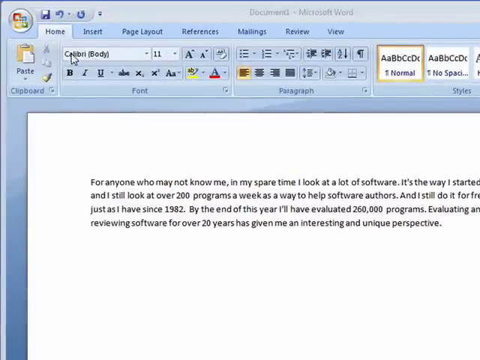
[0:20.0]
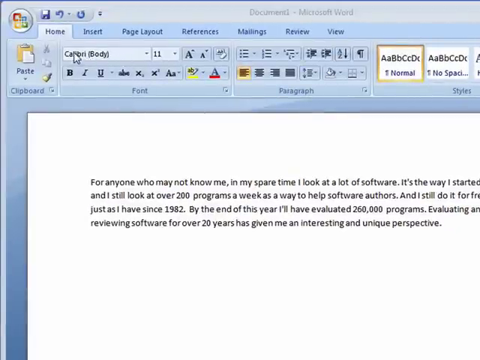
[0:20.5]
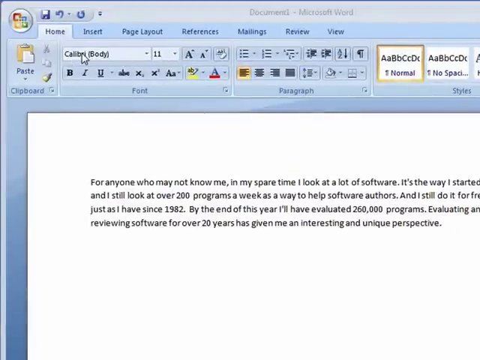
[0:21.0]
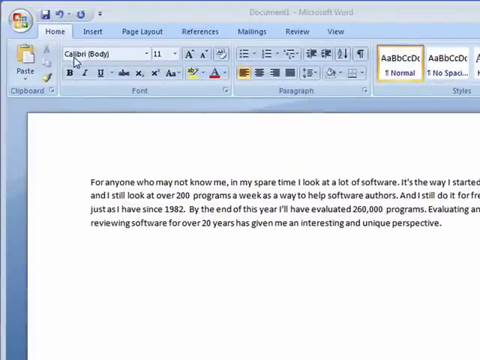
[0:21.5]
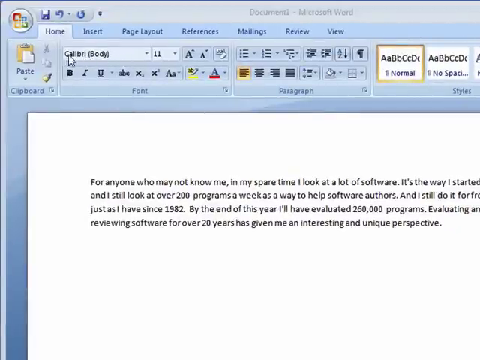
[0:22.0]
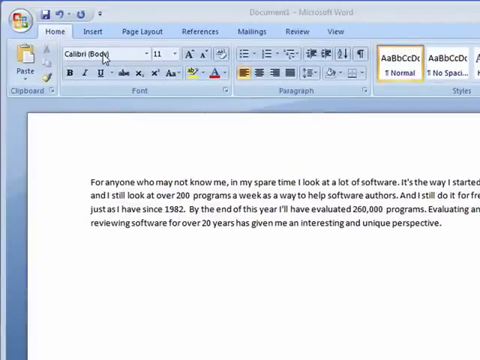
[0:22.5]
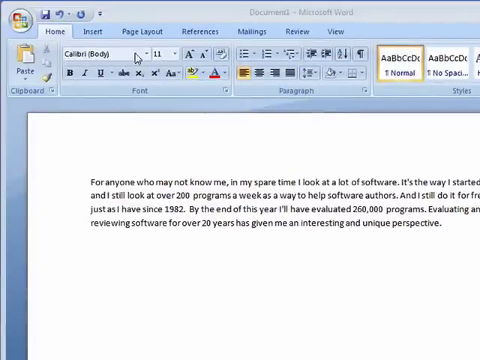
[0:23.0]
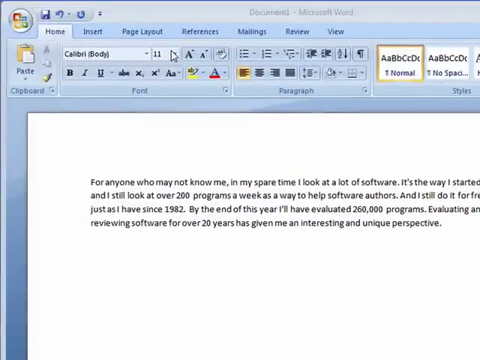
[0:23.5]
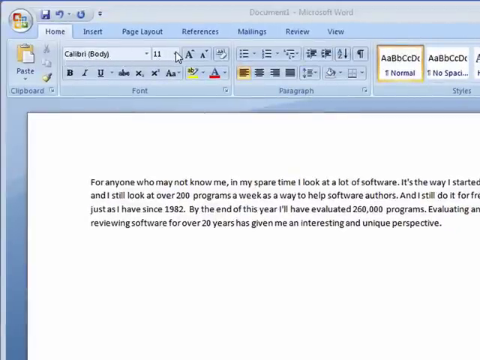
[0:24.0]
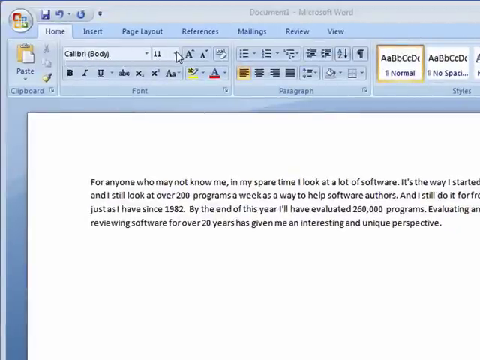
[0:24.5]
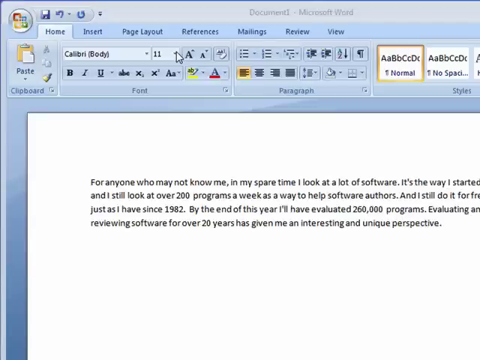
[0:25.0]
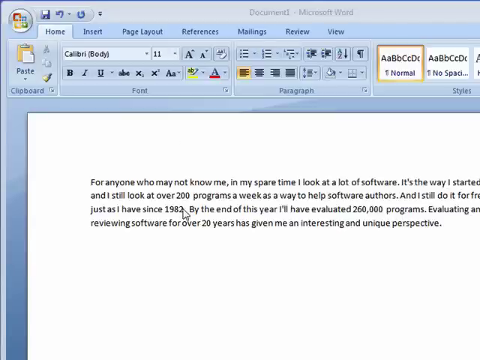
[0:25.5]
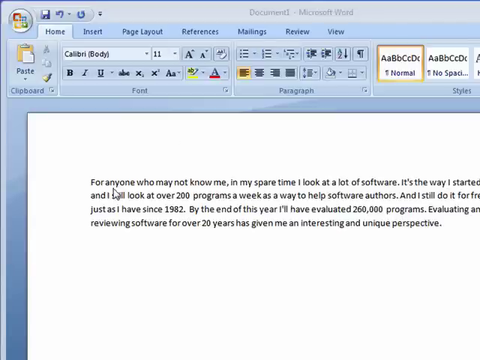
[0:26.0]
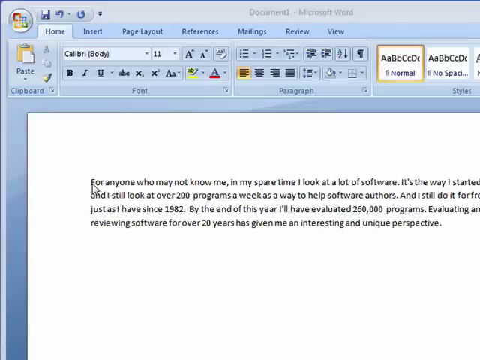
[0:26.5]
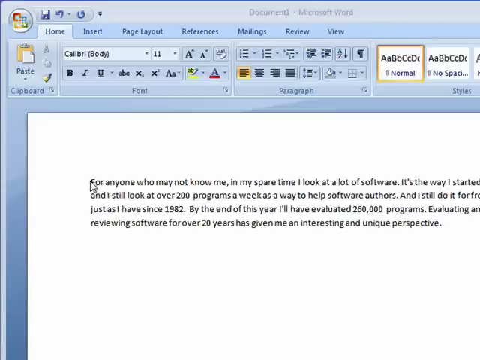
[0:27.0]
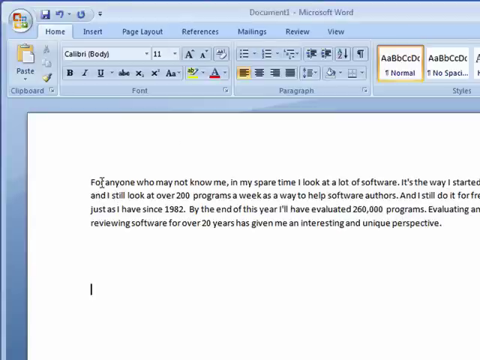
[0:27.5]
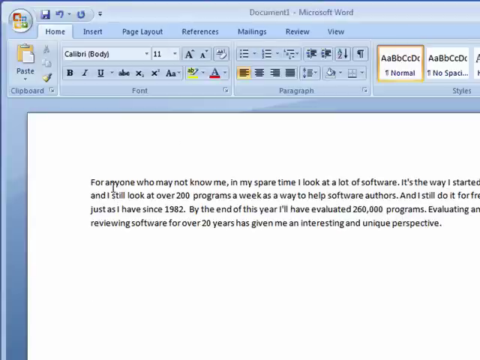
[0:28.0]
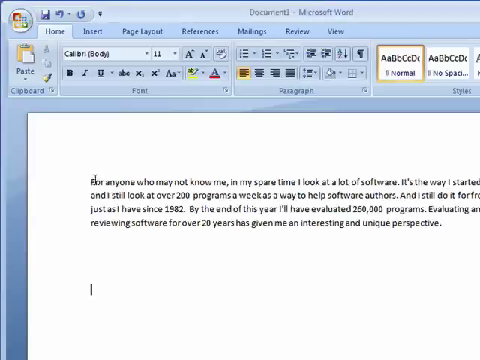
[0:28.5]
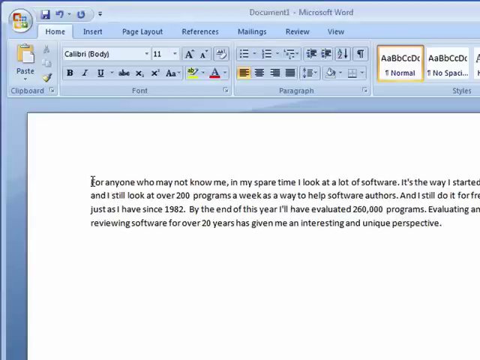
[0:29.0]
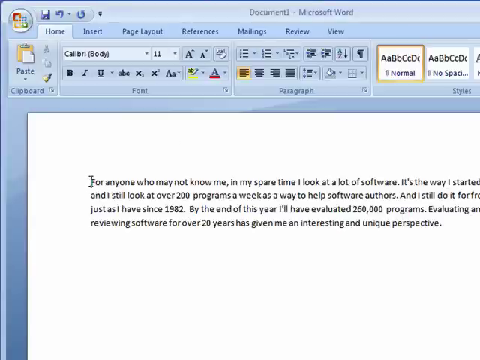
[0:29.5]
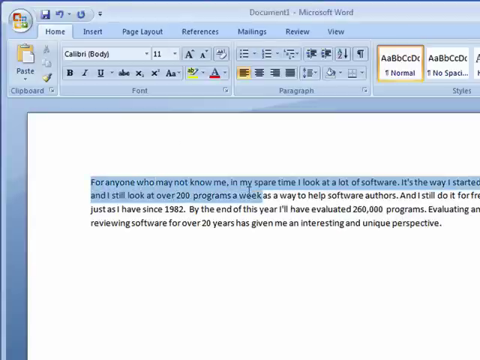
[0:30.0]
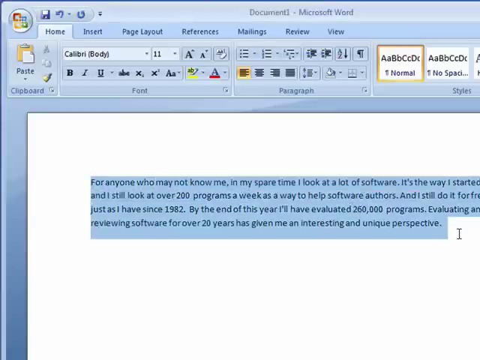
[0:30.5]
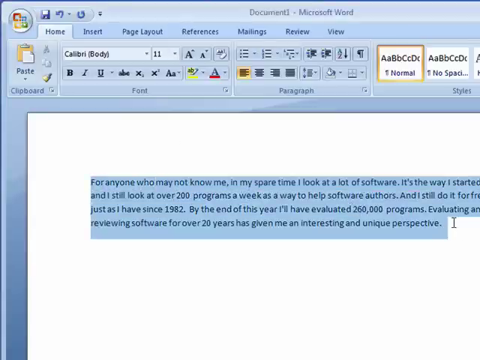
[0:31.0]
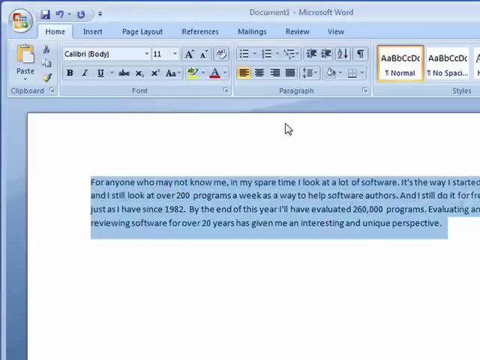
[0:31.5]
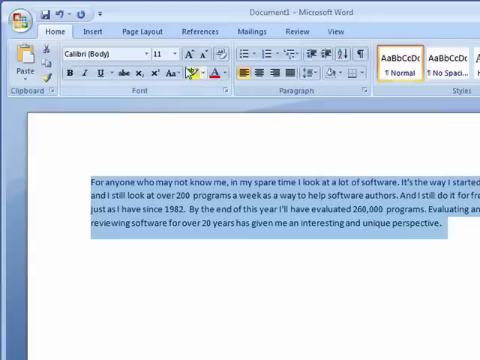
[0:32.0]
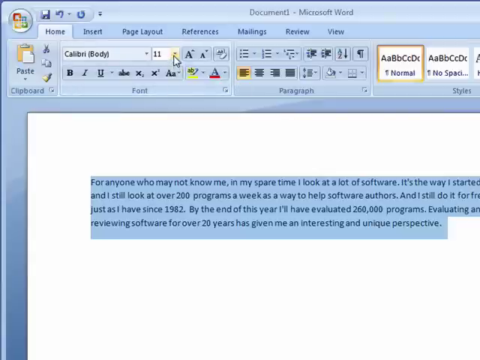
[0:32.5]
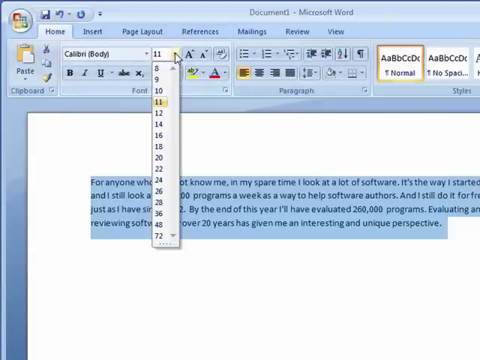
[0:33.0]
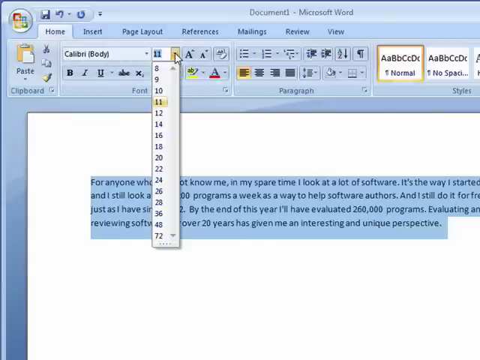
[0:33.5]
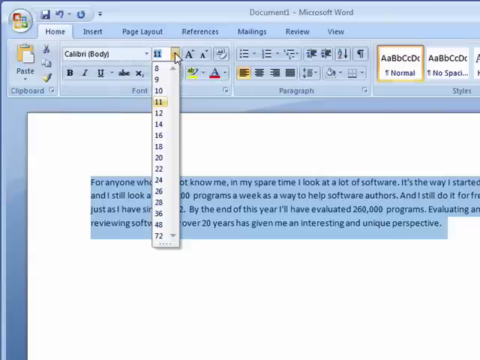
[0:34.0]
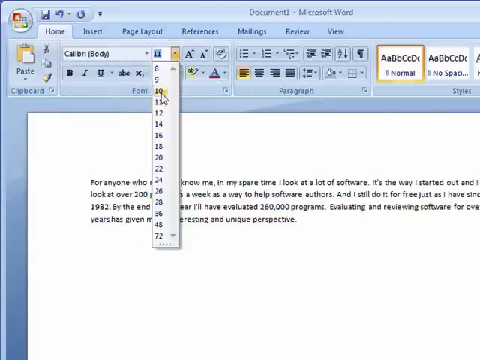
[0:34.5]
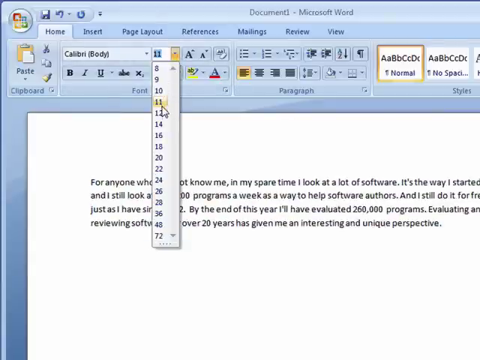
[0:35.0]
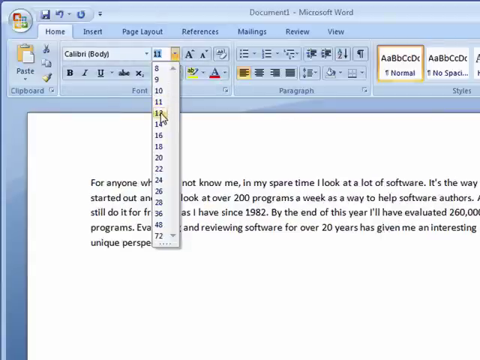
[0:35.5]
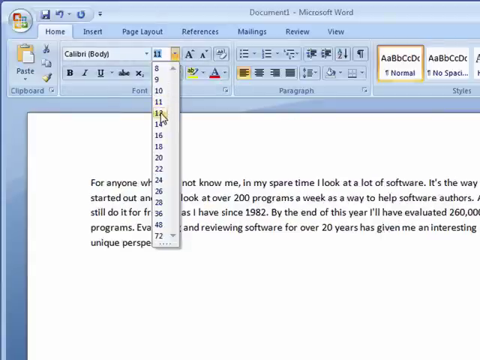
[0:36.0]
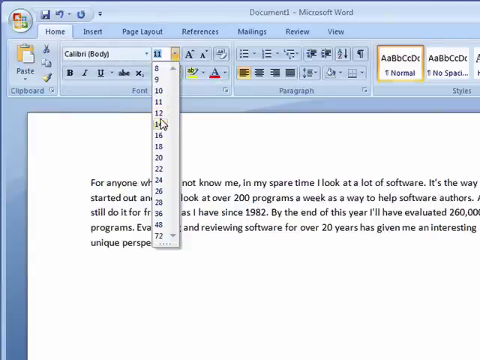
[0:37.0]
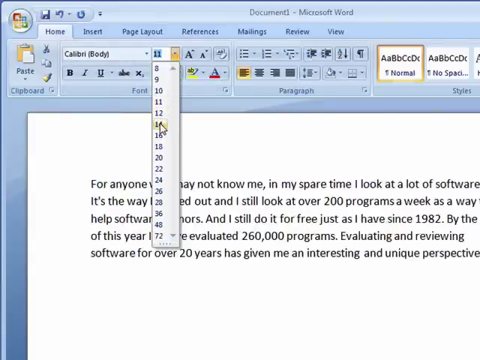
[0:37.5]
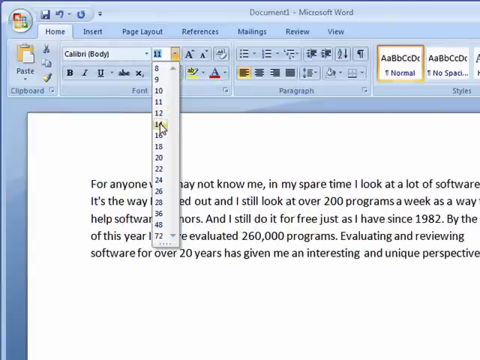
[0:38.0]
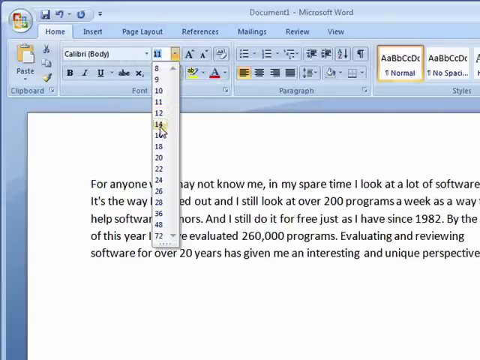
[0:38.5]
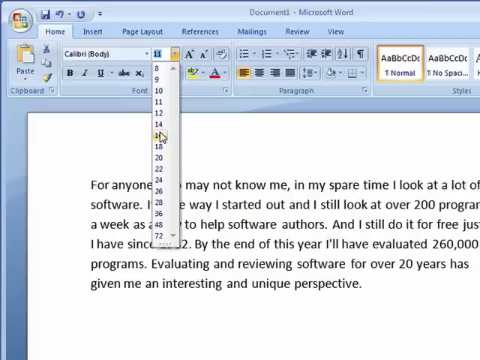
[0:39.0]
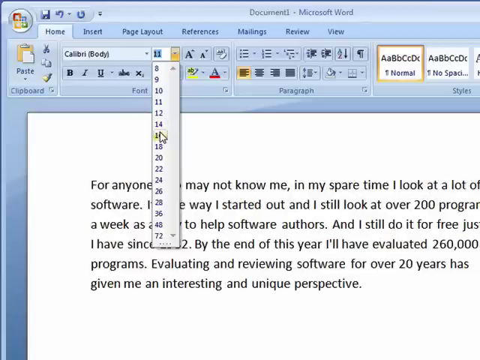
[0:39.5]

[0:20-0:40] In Microsoft Word, a man has typed up some text as a visual example. He goes up to the font size setting and changes the size for the whole text rather than just a few words, and shows how to select a font type. Lots of numbers for changing sizes are visible. He does not pull down the font type list on this page, but selects sizes higher and lower on the font size scale to show how the text changes.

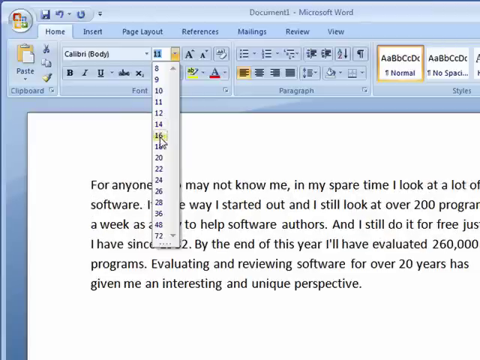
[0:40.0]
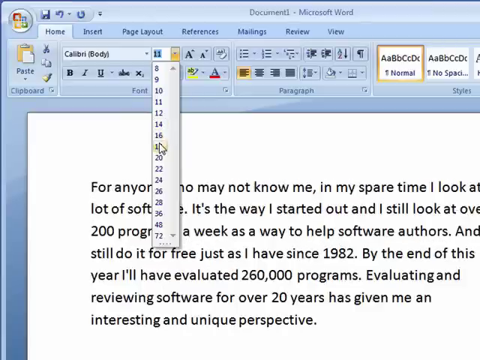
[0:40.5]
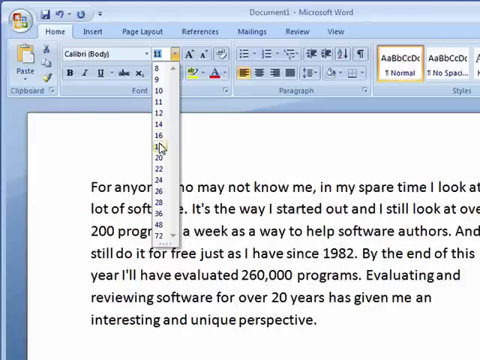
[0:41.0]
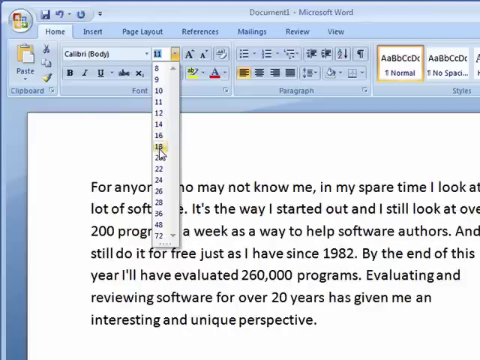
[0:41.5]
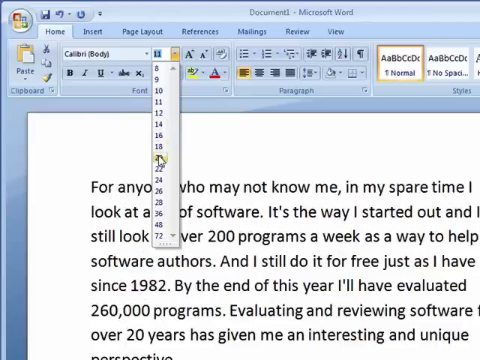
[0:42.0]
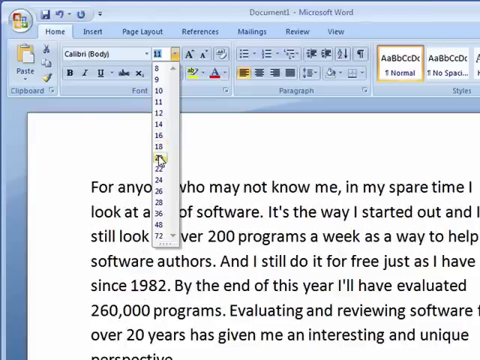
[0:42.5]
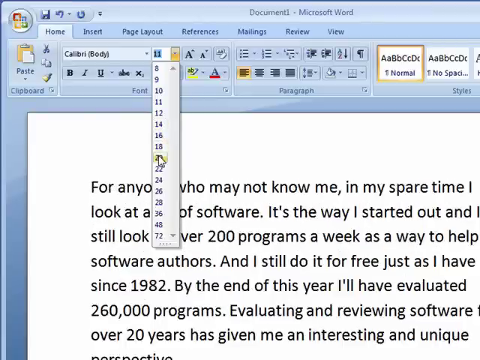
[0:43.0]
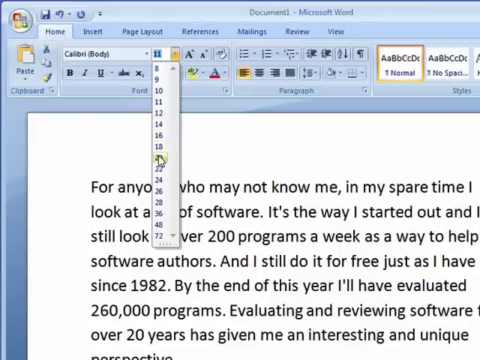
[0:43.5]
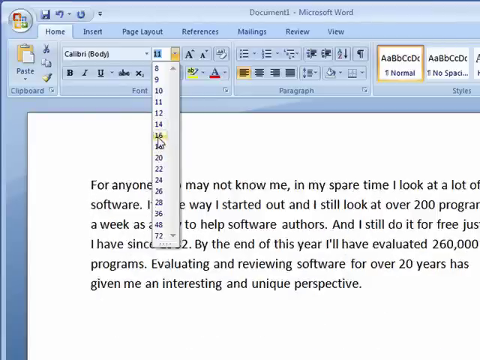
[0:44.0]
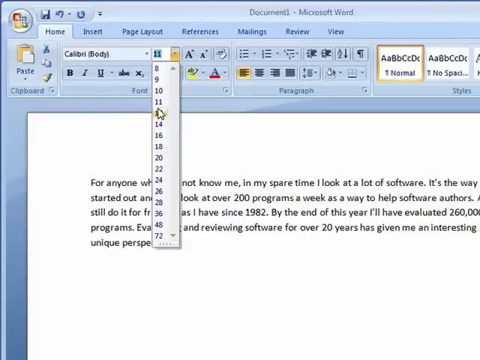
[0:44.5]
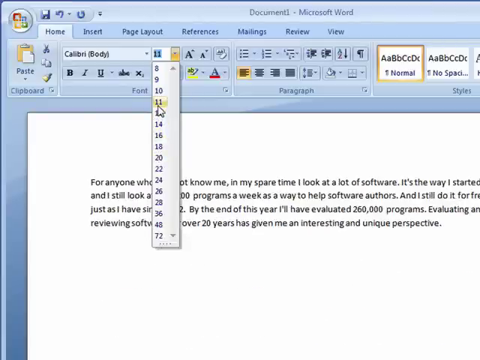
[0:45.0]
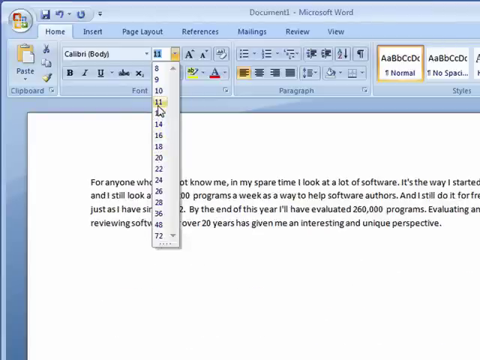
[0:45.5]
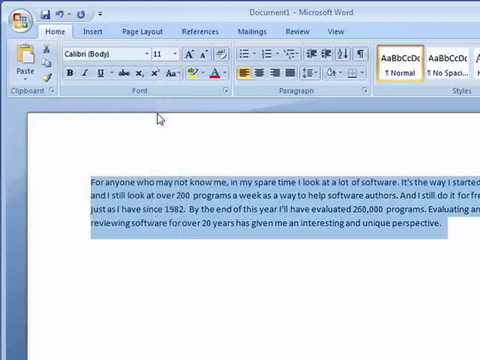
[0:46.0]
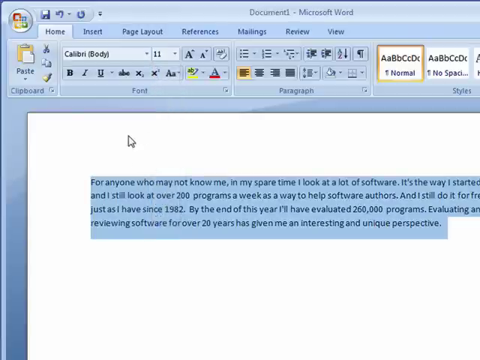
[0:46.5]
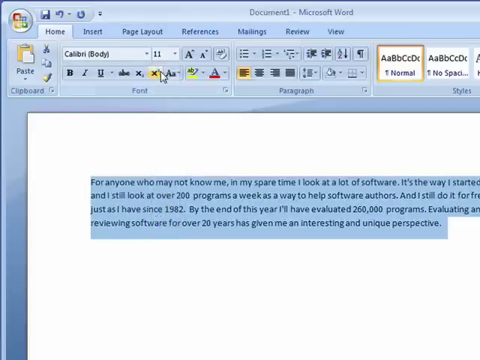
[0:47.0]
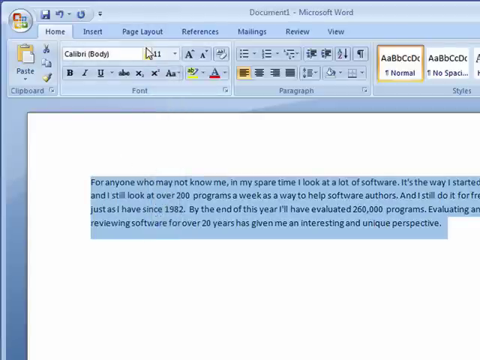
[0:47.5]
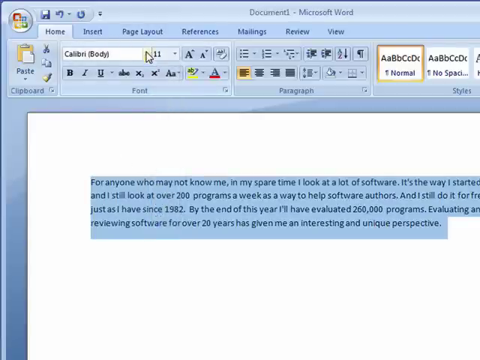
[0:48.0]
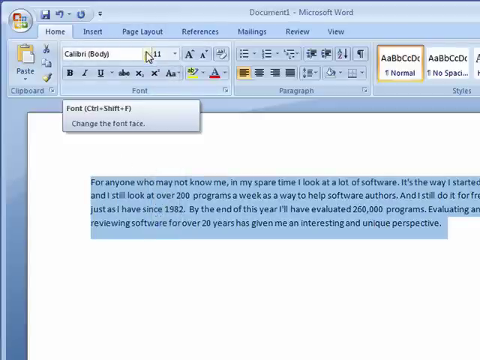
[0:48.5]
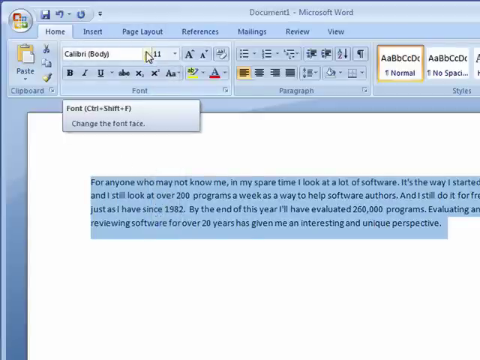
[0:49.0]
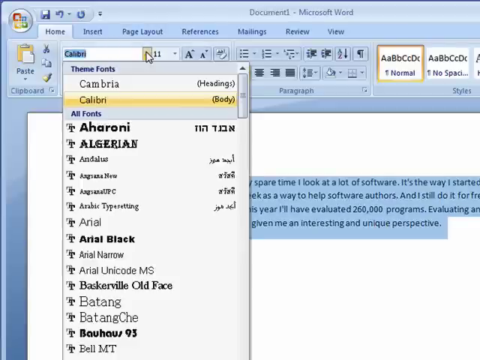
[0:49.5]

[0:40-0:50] In Microsoft Word, the man goes up and down the font sizes, from about 8 to 72, and the text gets bigger and smaller with the higher and lower numbers. With everything selected, he changes the font size of the whole paragraph, then moves to the different font types available. He appears to press certain buttons, possibly shortcuts, though it is unclear what they do.